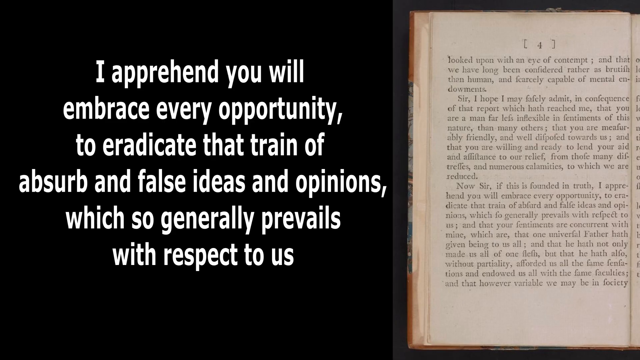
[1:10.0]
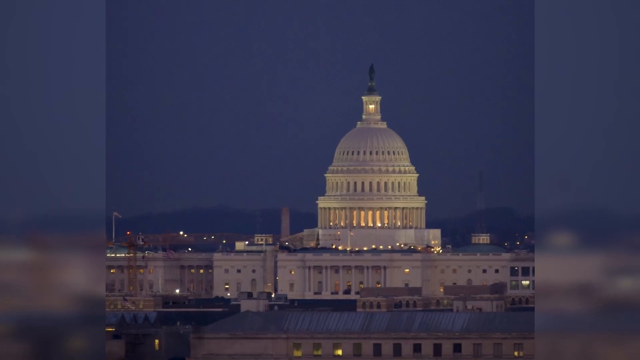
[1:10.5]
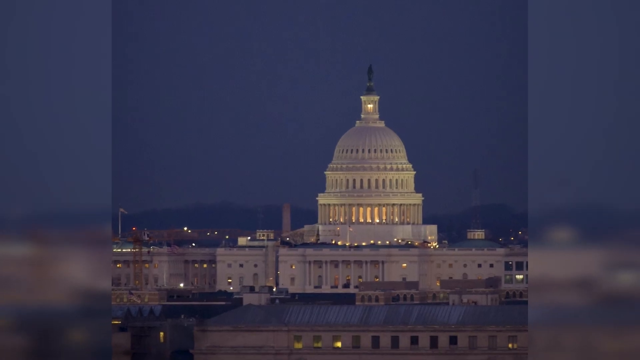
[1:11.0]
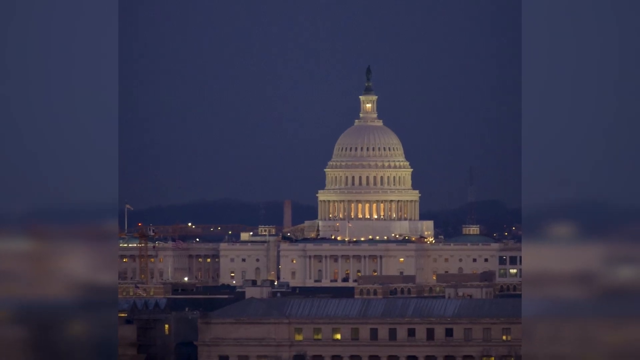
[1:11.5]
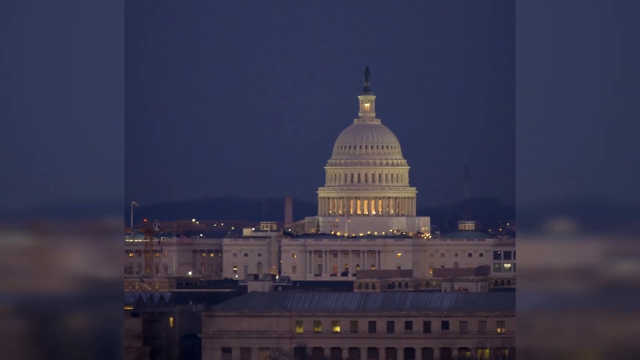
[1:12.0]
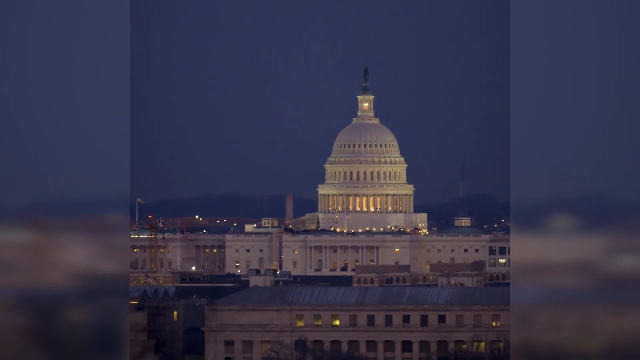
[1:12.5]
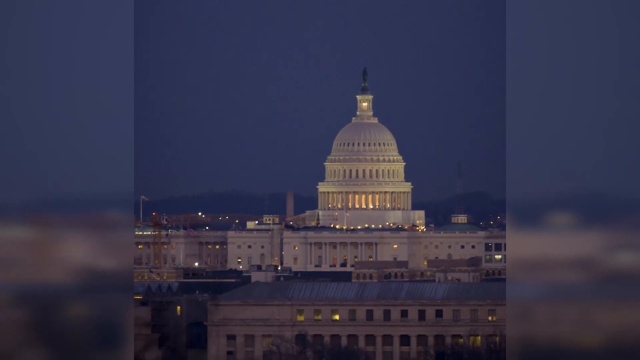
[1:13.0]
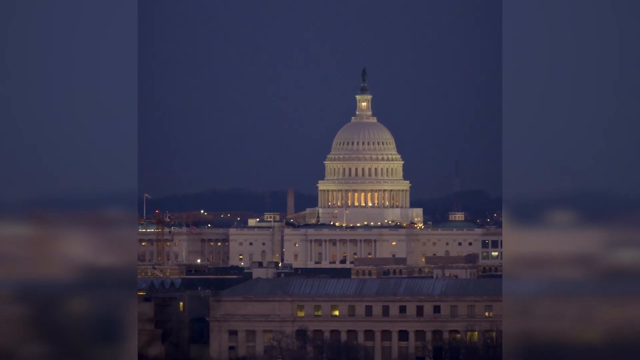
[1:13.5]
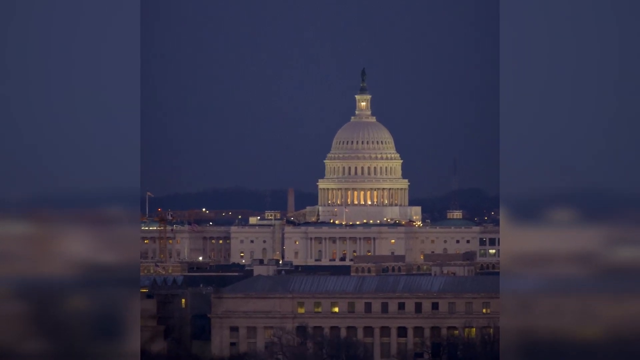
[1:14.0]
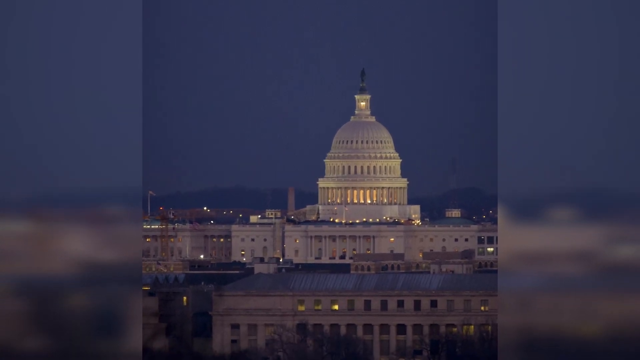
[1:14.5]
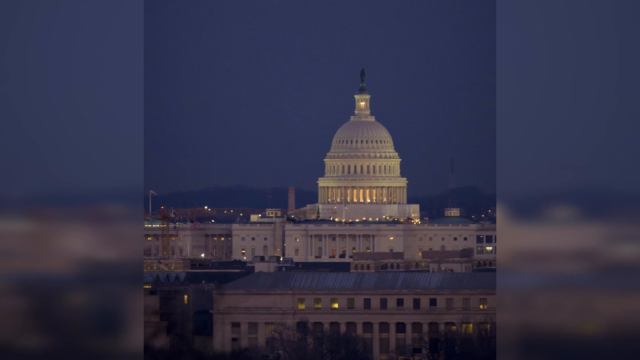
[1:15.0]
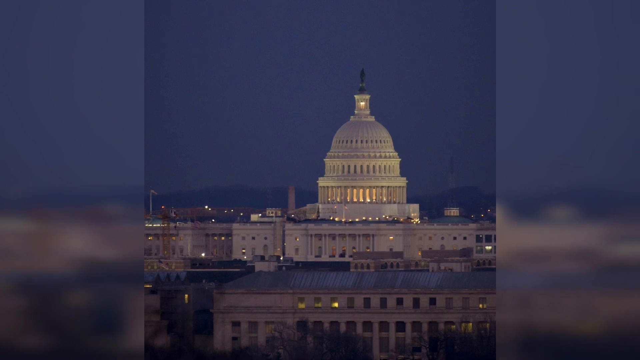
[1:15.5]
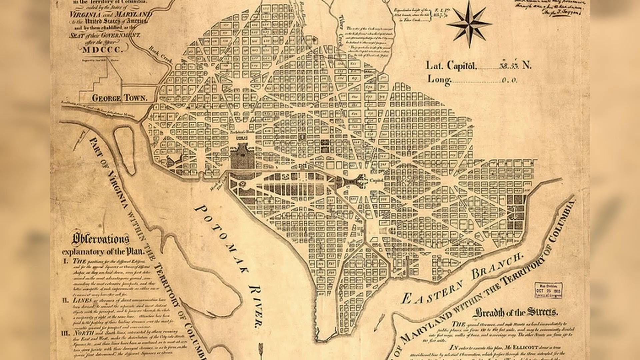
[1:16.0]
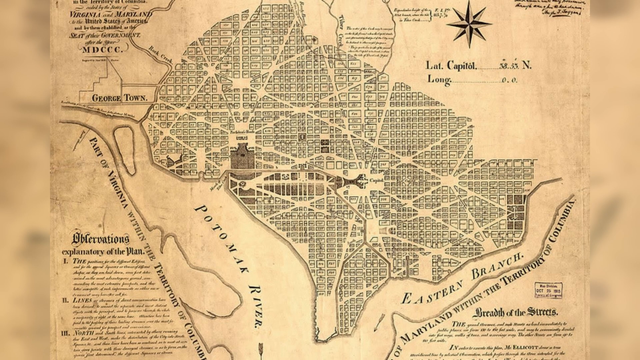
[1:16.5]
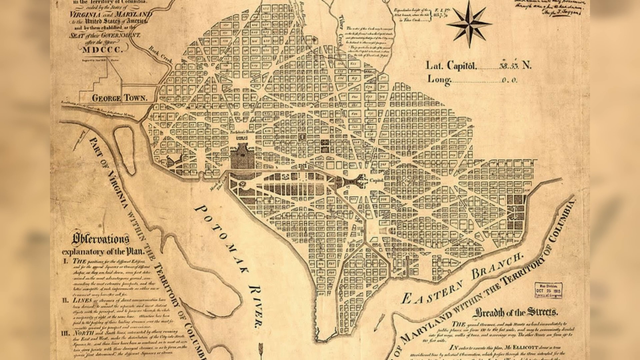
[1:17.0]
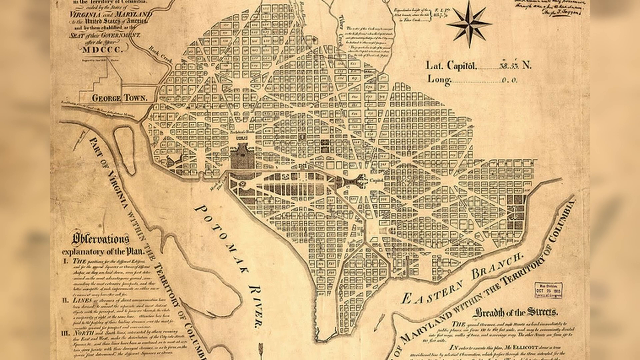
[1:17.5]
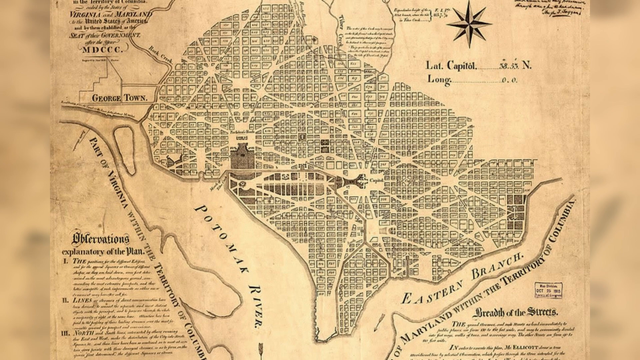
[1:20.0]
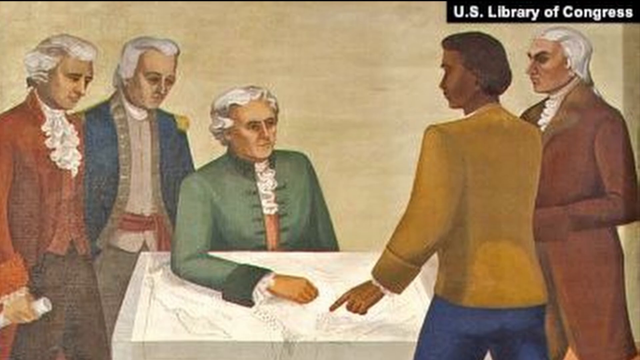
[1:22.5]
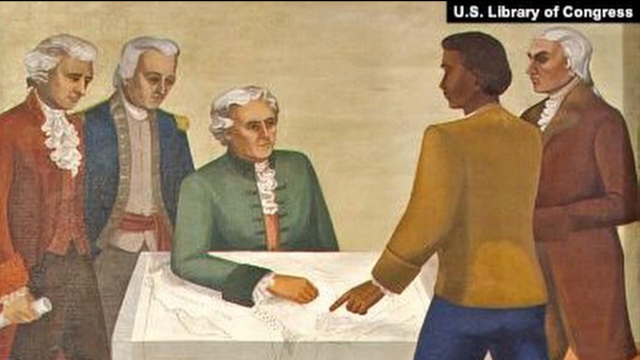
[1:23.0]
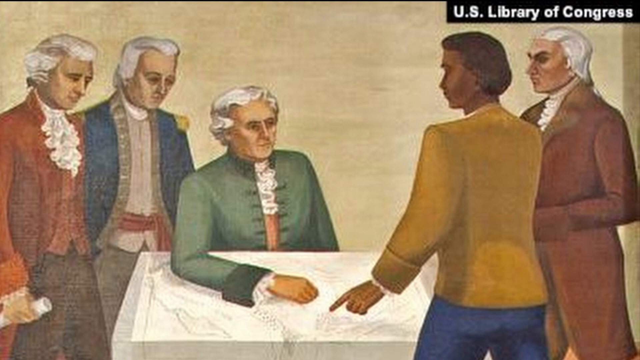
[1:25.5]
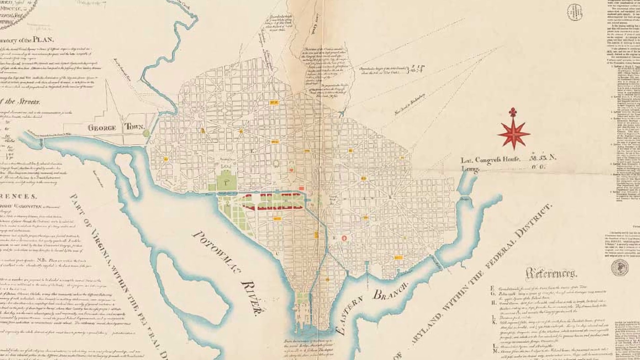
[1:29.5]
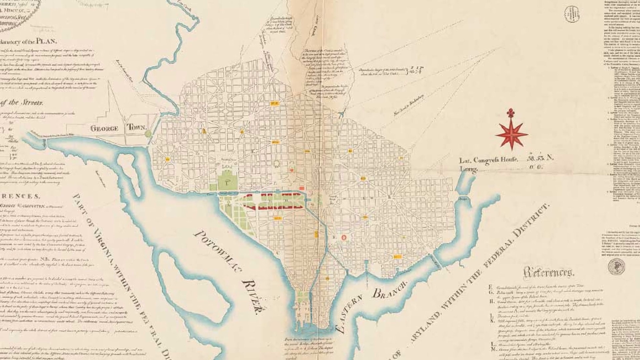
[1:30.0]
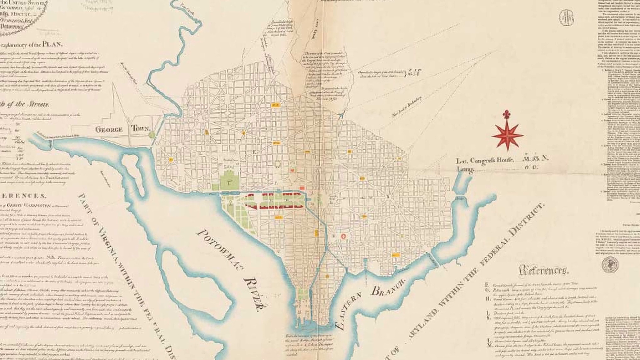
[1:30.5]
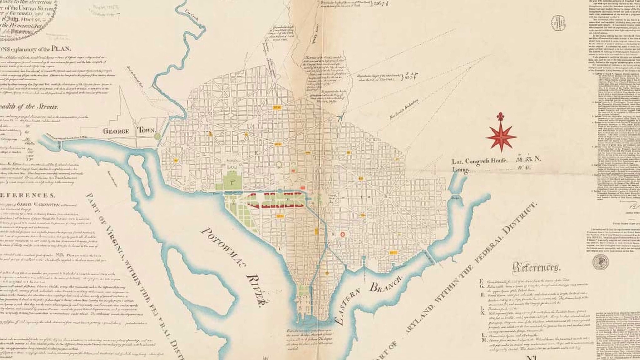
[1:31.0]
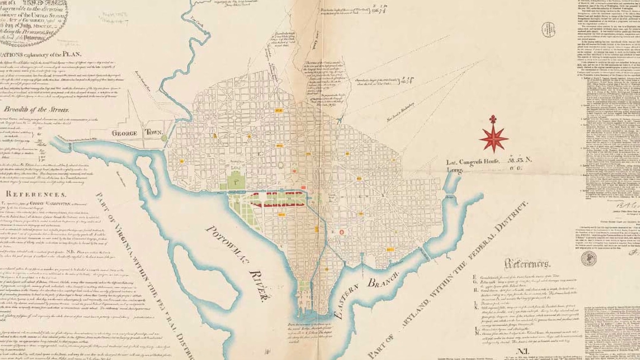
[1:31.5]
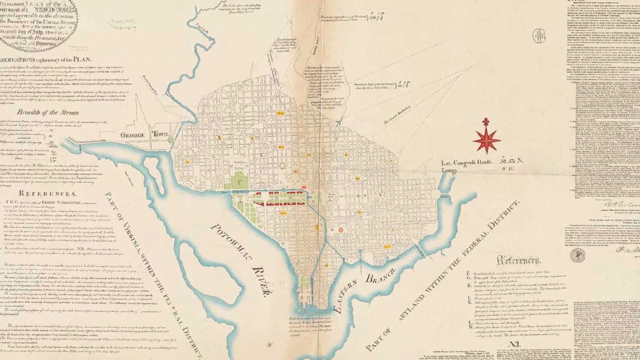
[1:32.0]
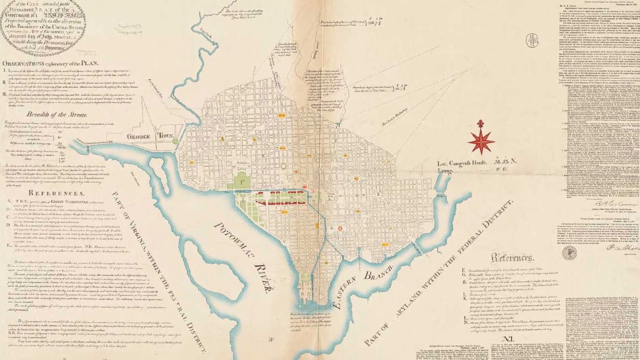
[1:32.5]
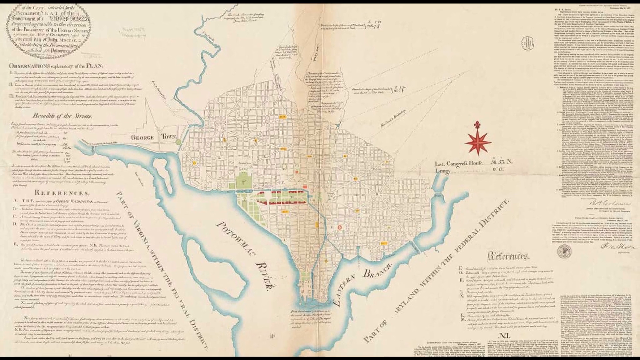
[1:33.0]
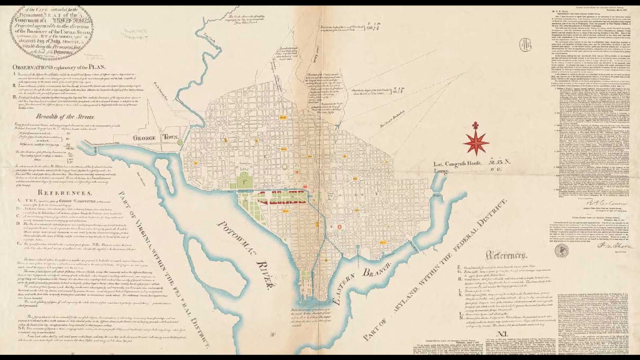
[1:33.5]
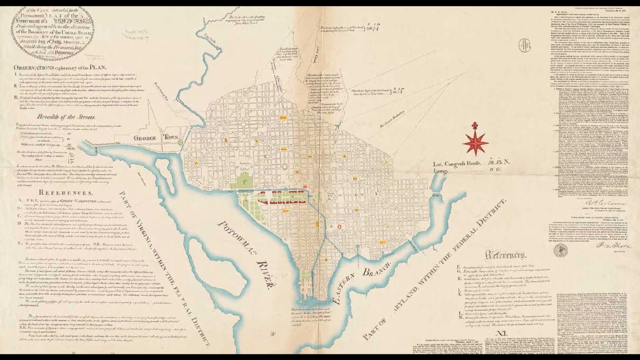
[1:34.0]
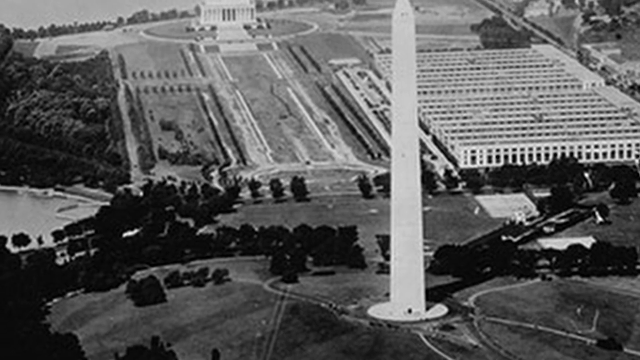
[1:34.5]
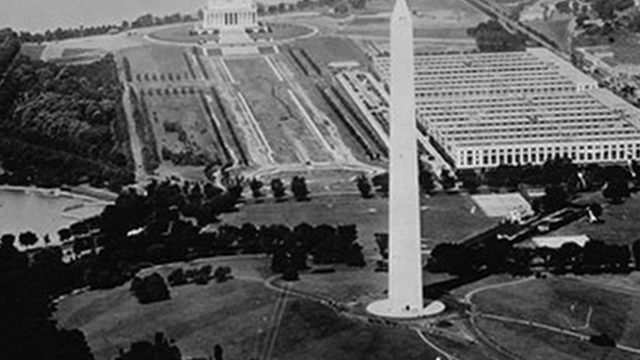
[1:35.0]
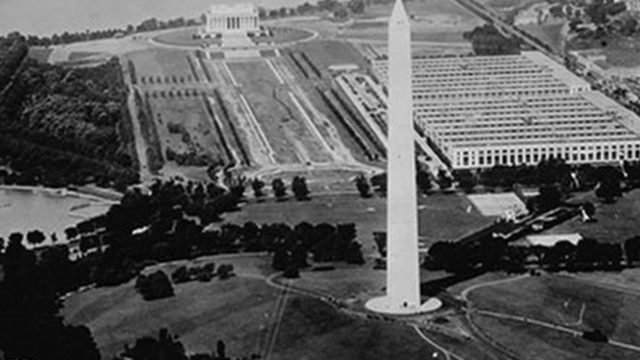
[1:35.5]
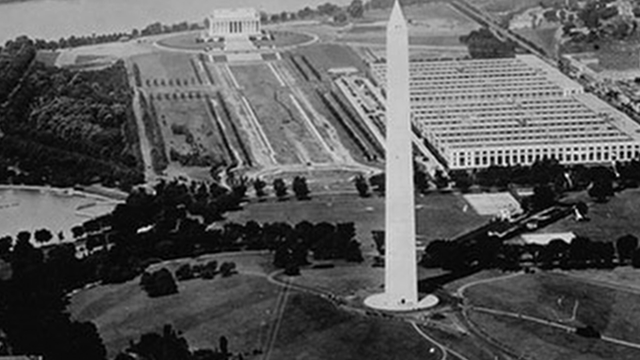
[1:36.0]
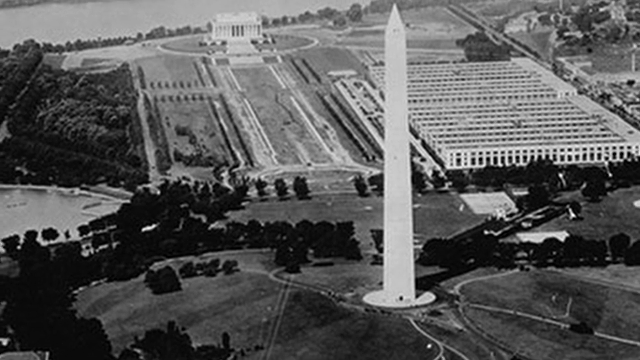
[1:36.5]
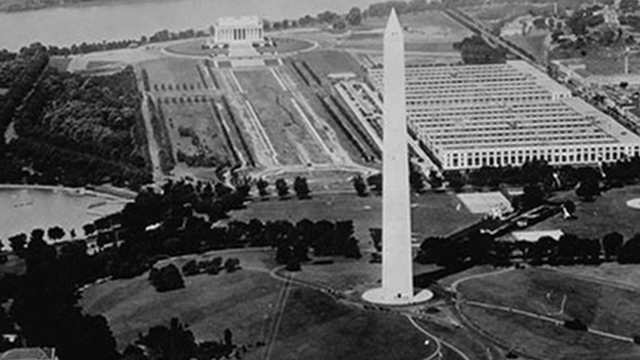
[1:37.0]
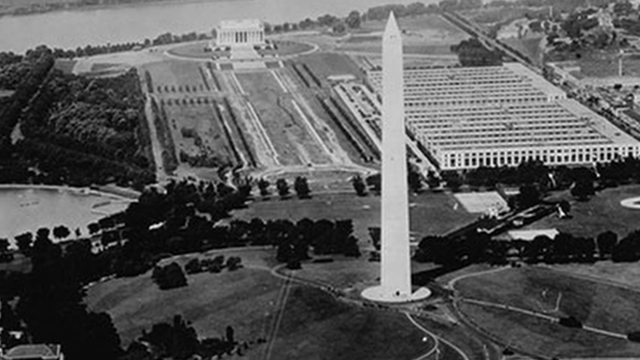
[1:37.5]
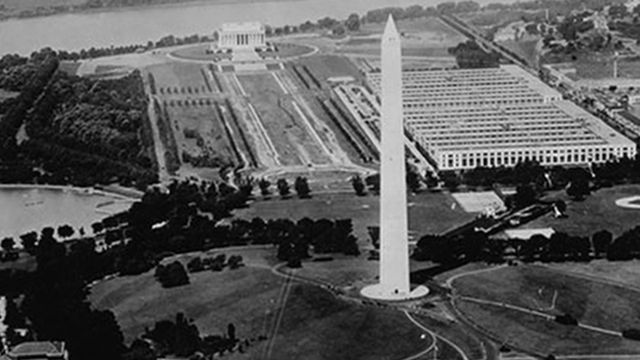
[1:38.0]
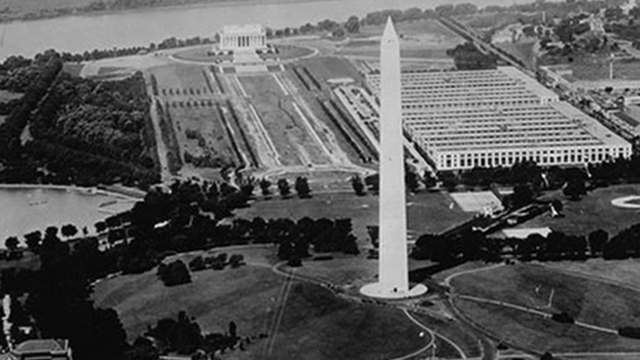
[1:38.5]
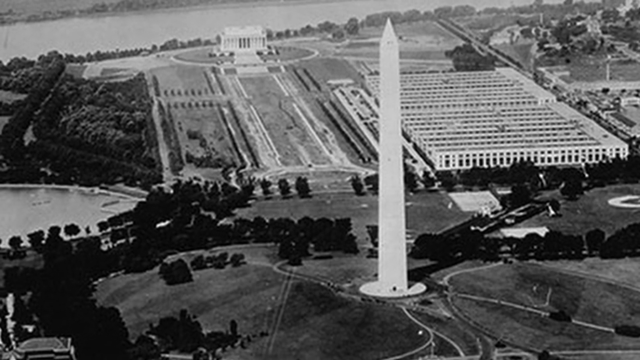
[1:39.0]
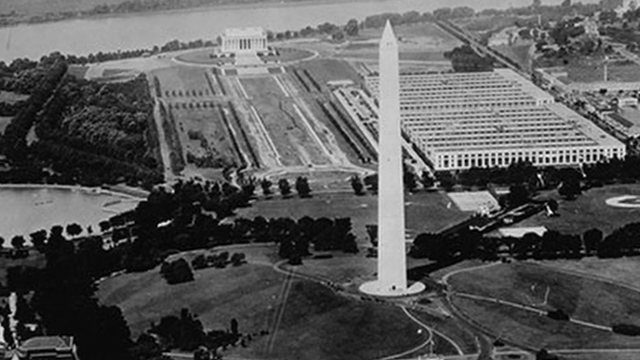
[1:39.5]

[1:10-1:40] The screen shows a picture of the White House in a night-time shot, with the Federal Washington buildings lit up against a dark blue sky; the buildings are in the foreground. The screen then cuts to an old-fashioned map that looks well used, showing the Potomac River and the town of Georgetown, with its buildings and streets. The next shot shows a gentleman in a green jacket with white styled hair and a ruffled white shirt sat at a table with a map. Stood in front of him is a black man in a yellow jacket and blue trousers, pointing to the map. Stood to this man's right is another man with white hair and a brown jacket. To the seated gentleman's left, two men with white hair, possibly wigs, are looking at the map. The caption at the top reads "U.S. Library of Congress". The screen then cuts to a detailed map showing parts of Virginia state, Maryland and Georgetown, with a lot of detail on either side that is too small to read. A black and white aerial photograph of the Washington Monument follows.